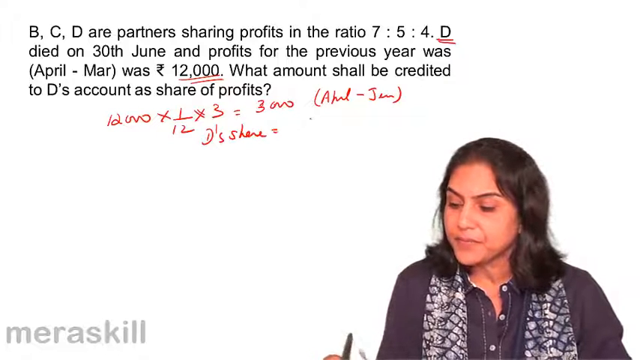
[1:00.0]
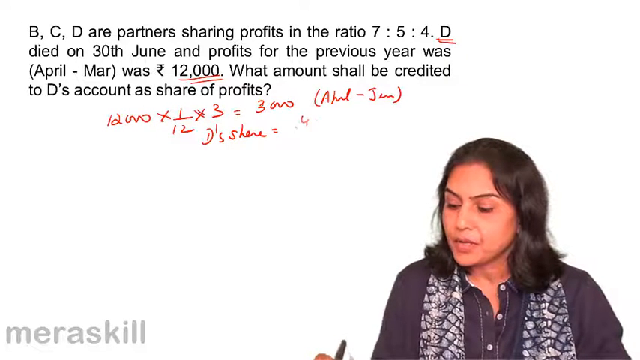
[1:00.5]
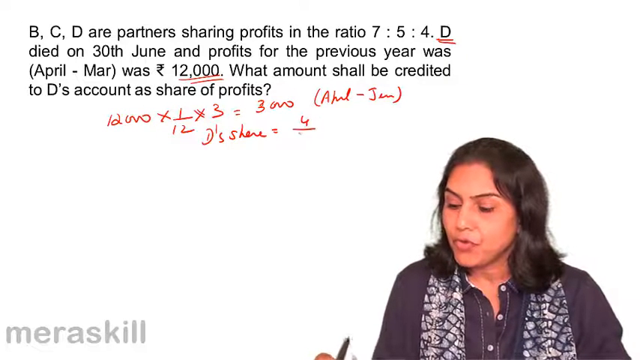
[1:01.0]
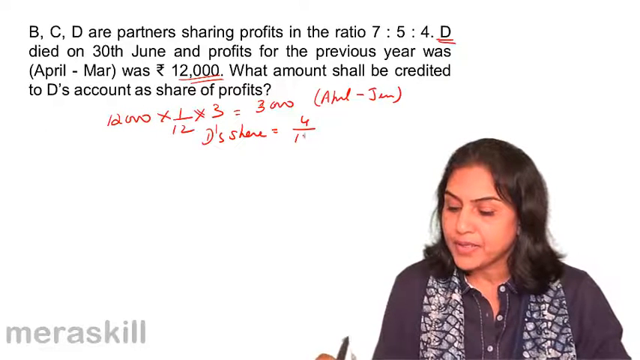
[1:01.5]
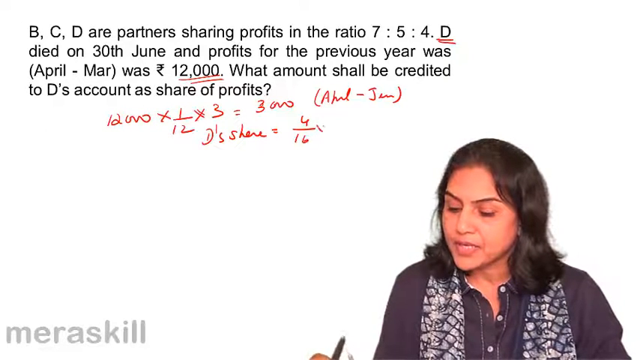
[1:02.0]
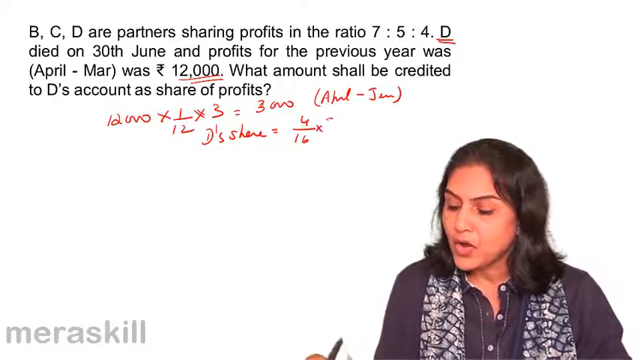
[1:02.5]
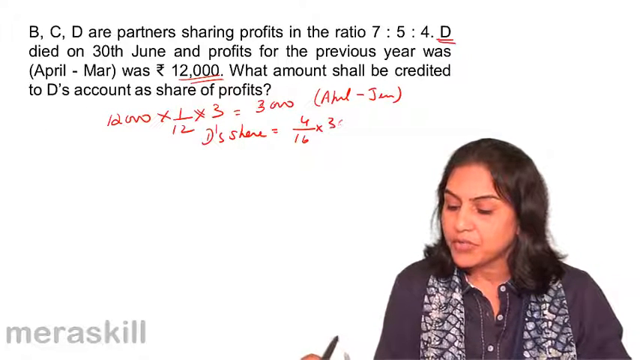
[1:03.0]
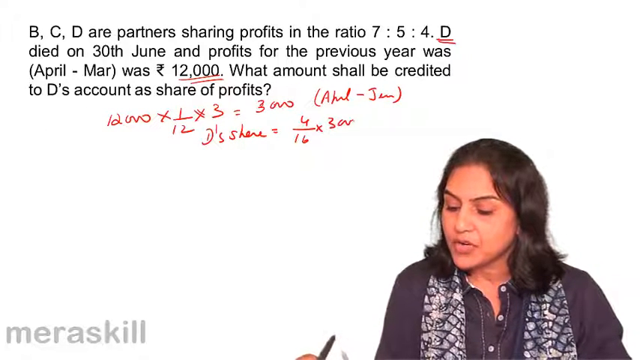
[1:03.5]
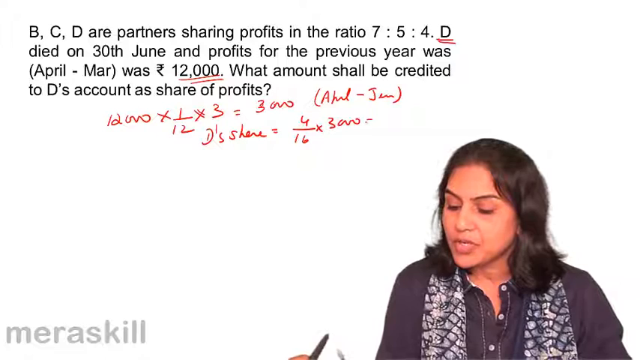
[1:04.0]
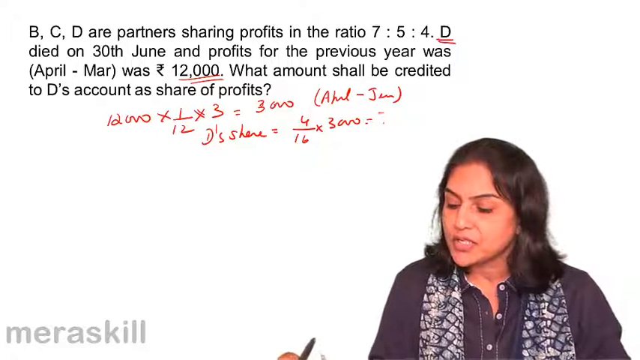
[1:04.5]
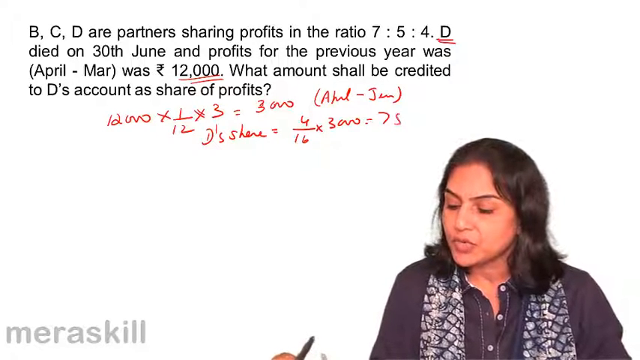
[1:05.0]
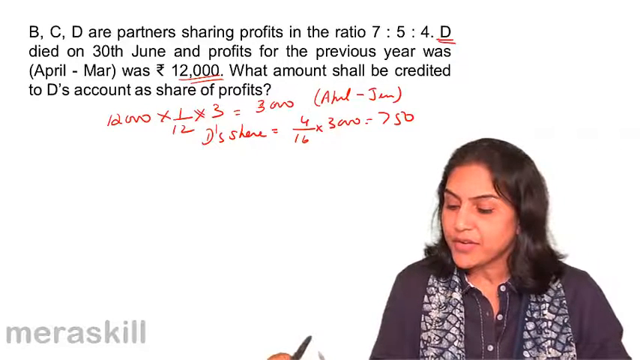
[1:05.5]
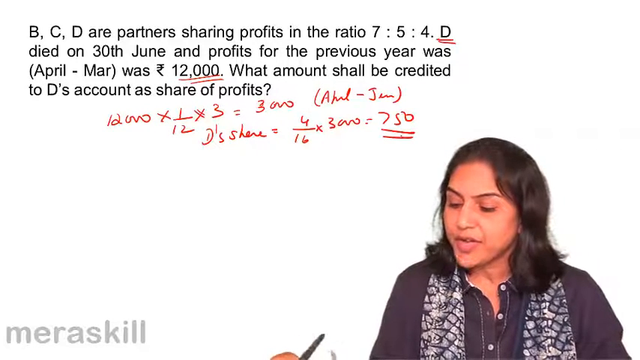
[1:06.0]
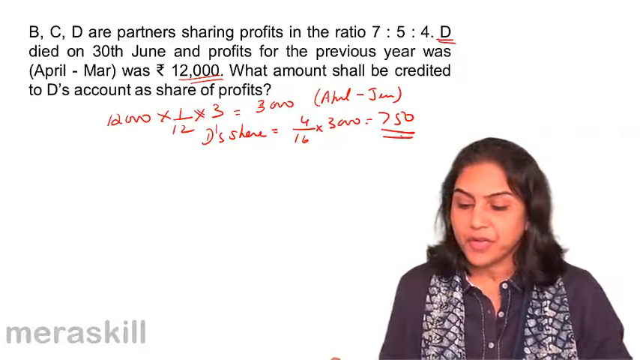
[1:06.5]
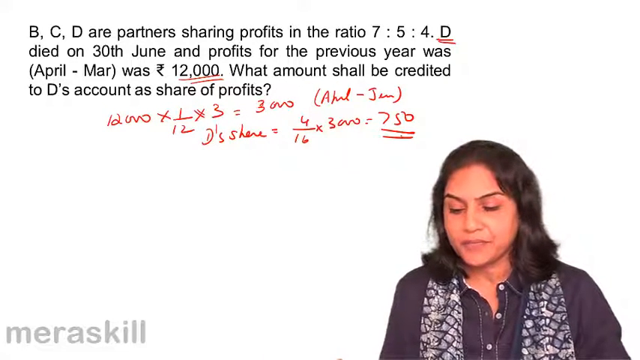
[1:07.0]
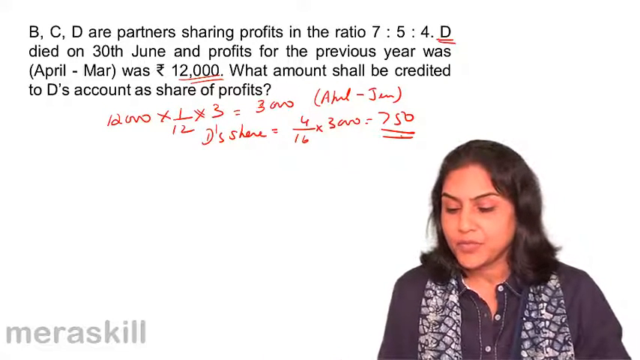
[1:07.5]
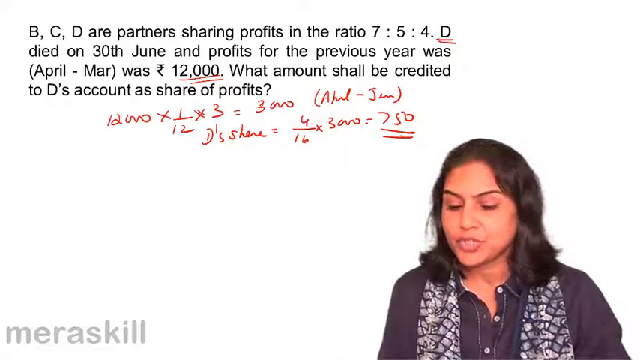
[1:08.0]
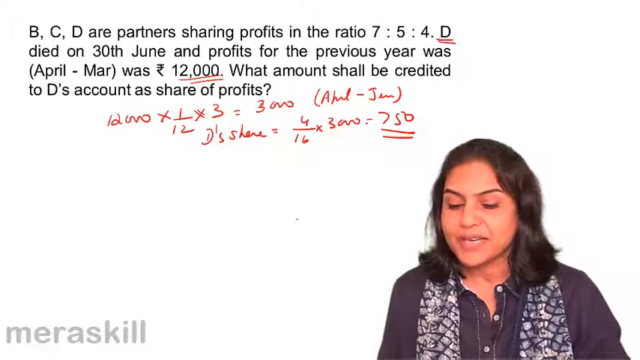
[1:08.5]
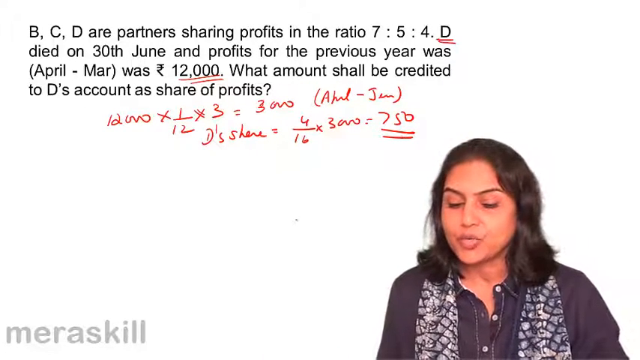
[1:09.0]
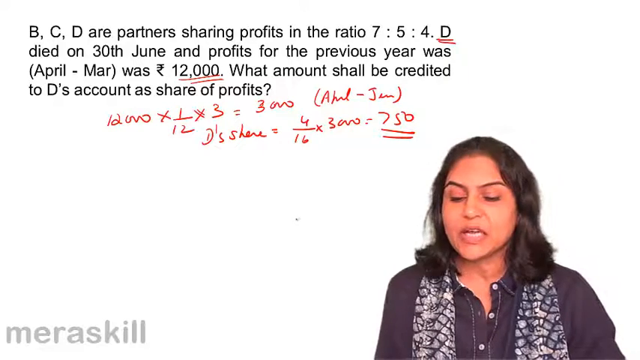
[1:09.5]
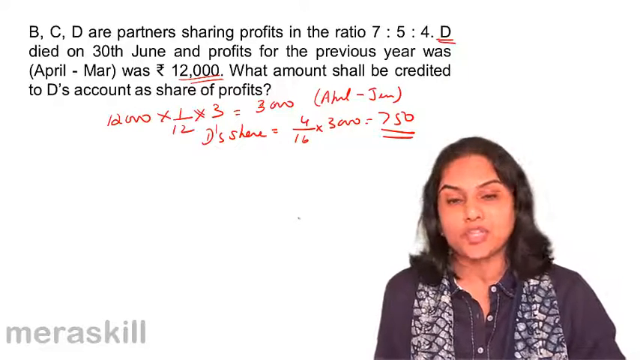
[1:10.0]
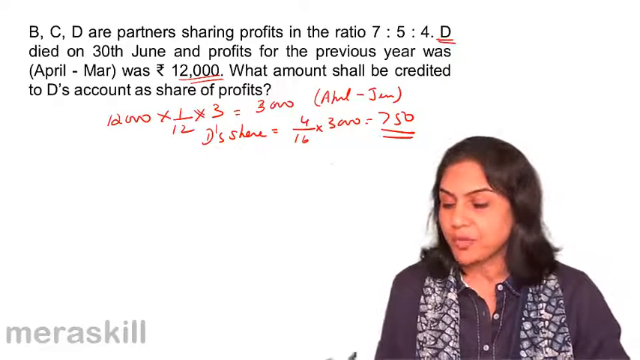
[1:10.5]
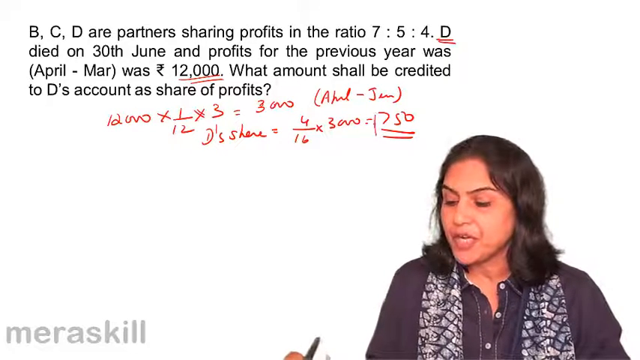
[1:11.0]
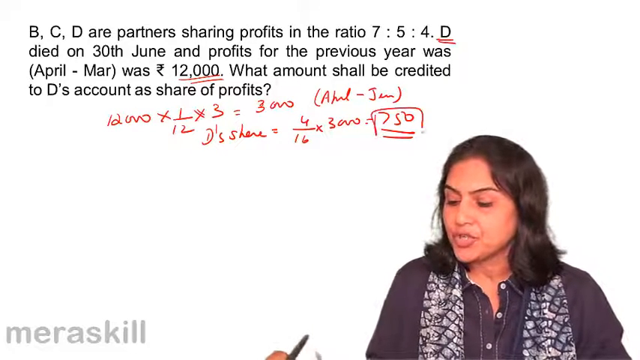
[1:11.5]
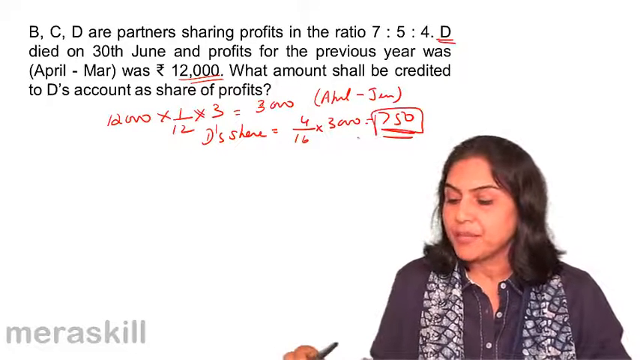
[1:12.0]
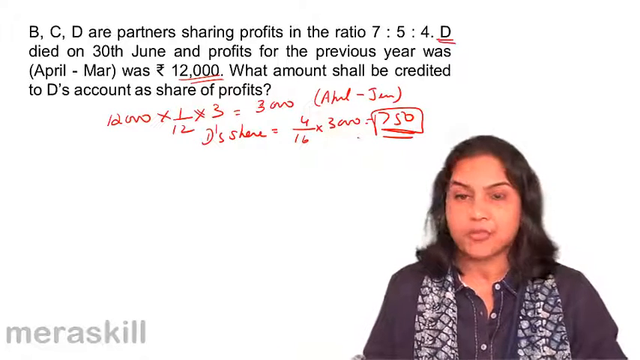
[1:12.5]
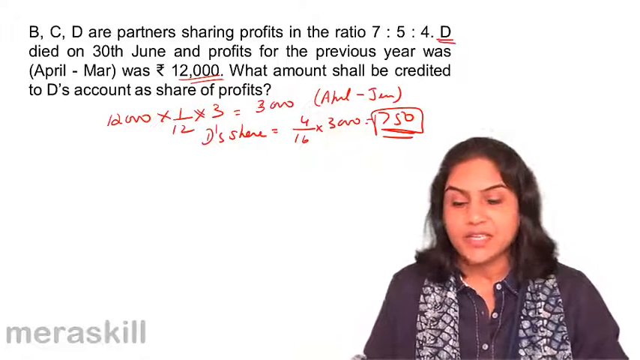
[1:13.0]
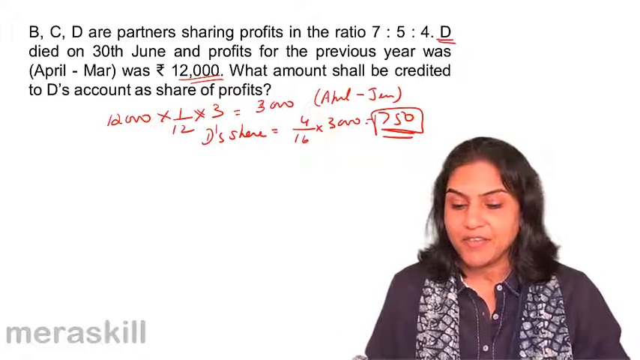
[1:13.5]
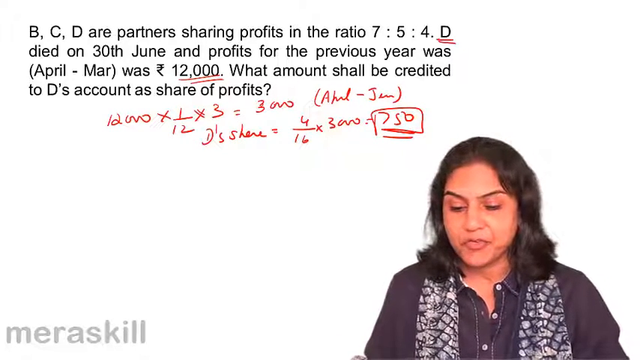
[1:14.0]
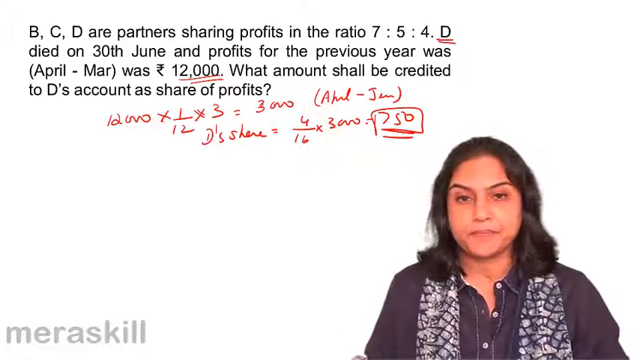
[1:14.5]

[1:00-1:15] The question "B, C, D are partners sharing profits in the ratio 7-5-4. D died on 30th June and profits for the previous year was April through March was $12,000. What amount shall be credited to D's account as share of profits?" is still on screen, along with the working "12,000 x1/12 x 3 = 3,000" for April through June. Below, "D share" is written, and it looks like it says 4 over 16 times 3,000. The woman speaks continuously while writing, and the screen shows that the share is $750.